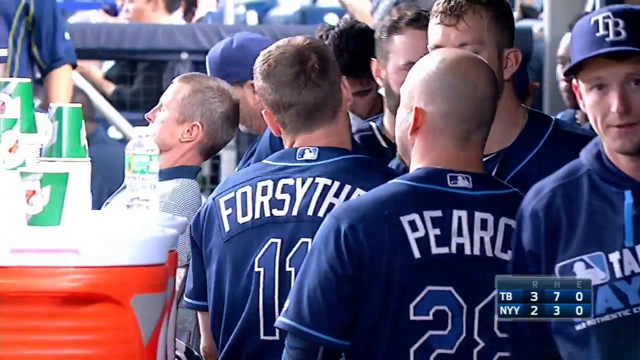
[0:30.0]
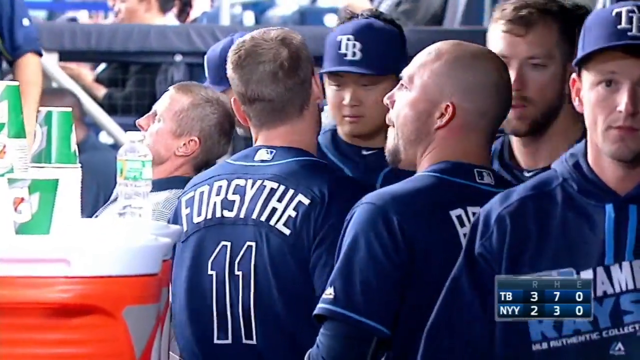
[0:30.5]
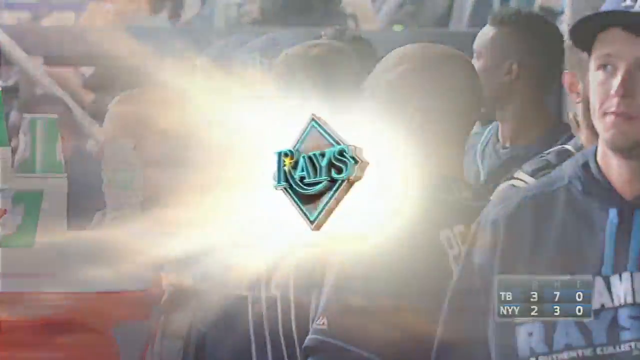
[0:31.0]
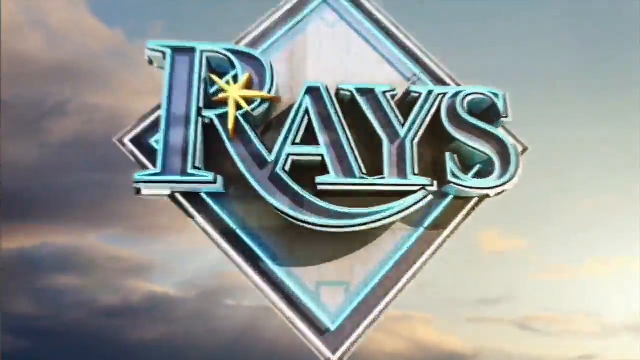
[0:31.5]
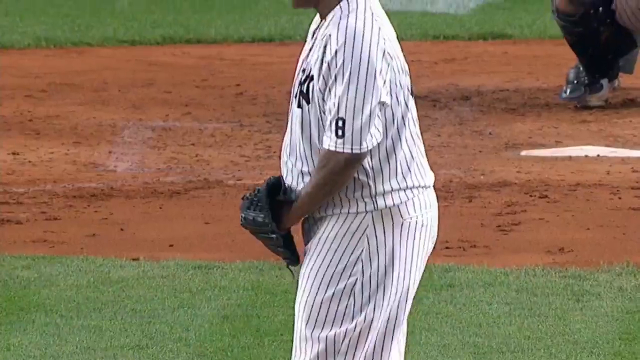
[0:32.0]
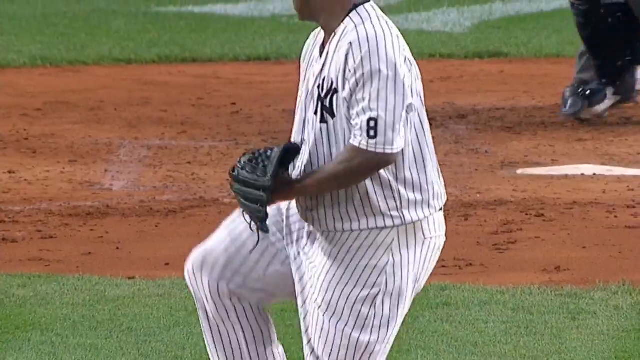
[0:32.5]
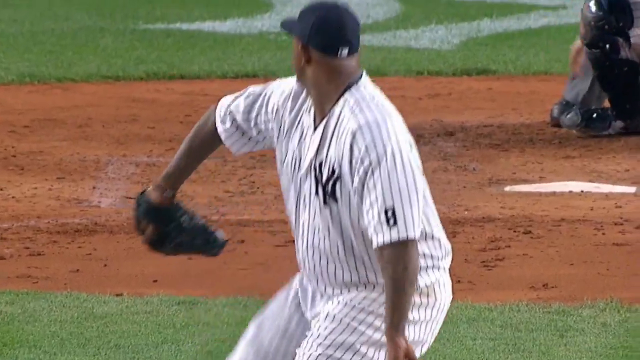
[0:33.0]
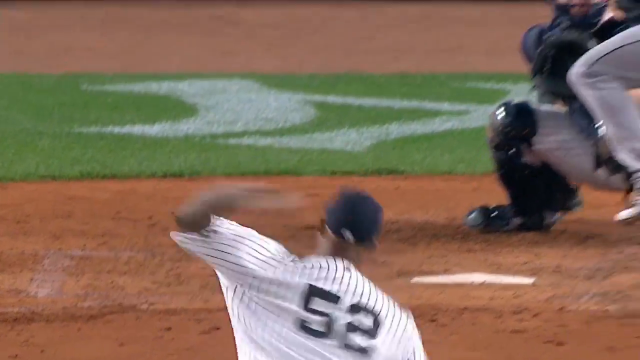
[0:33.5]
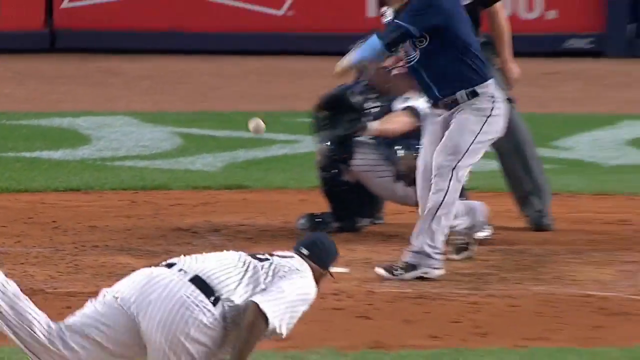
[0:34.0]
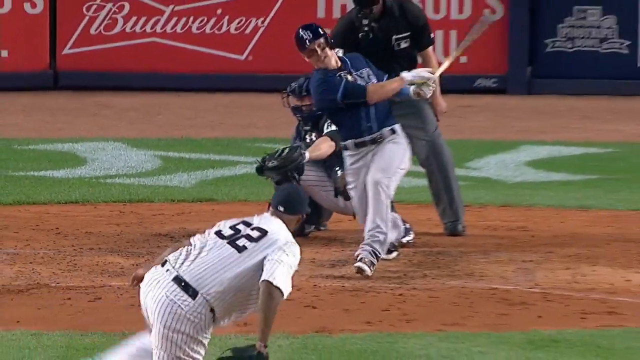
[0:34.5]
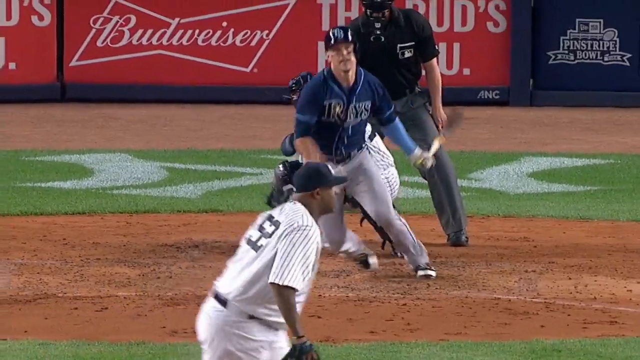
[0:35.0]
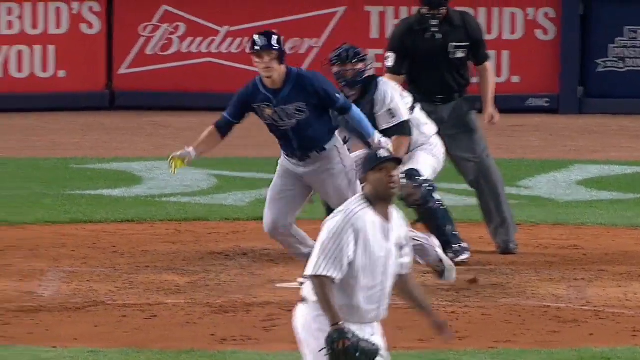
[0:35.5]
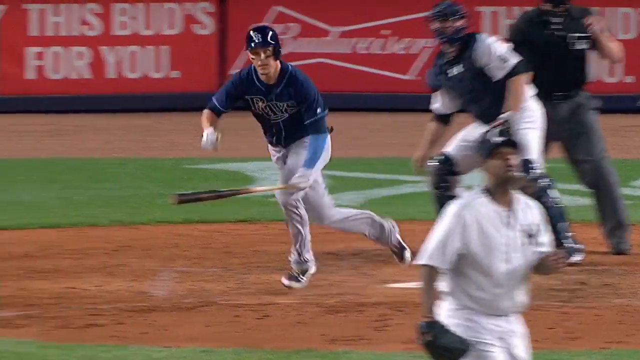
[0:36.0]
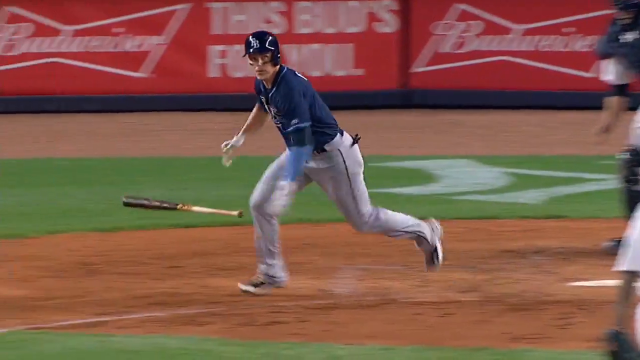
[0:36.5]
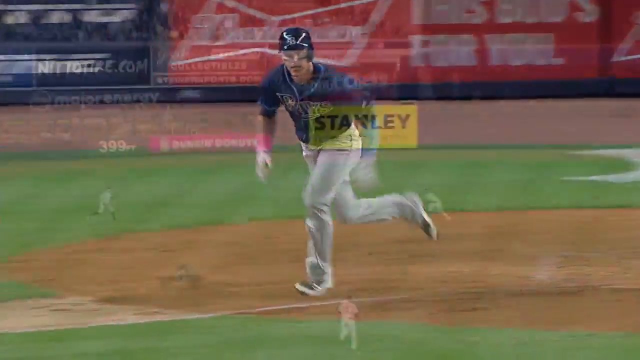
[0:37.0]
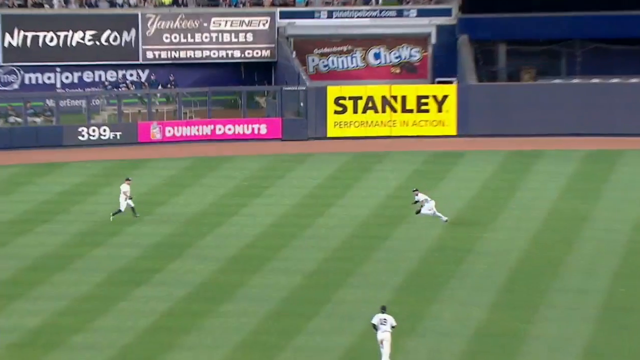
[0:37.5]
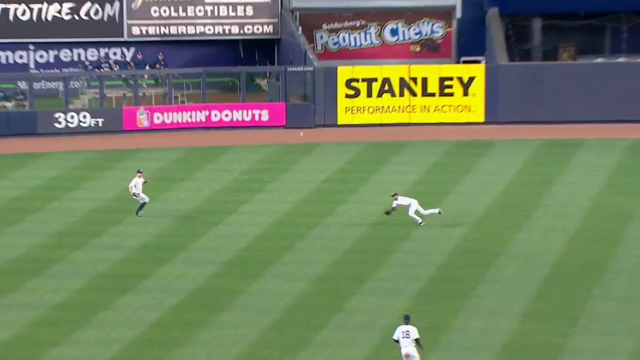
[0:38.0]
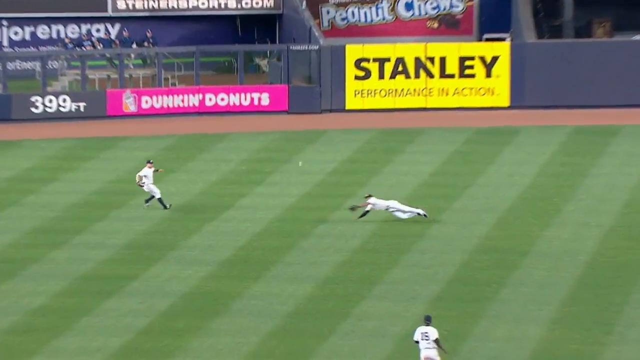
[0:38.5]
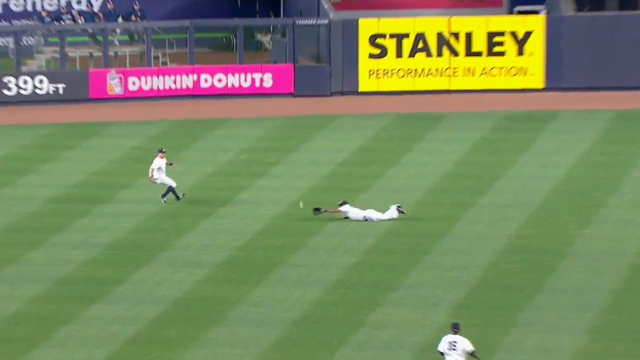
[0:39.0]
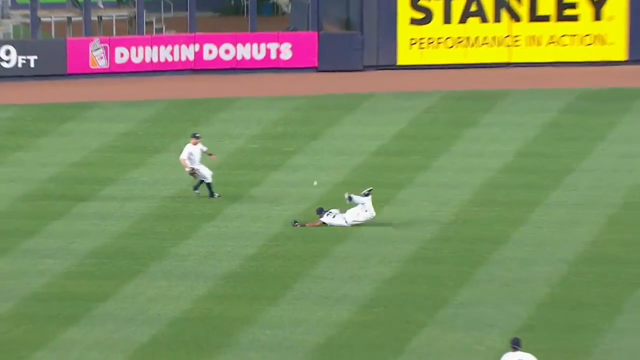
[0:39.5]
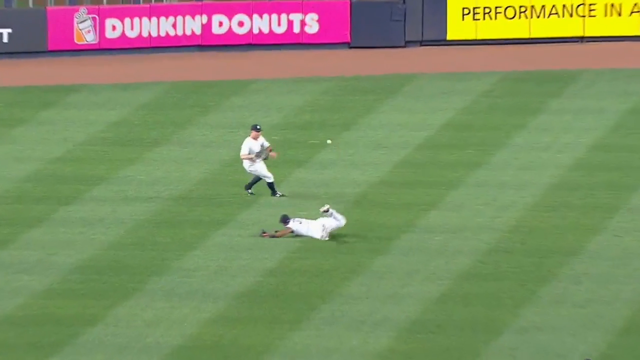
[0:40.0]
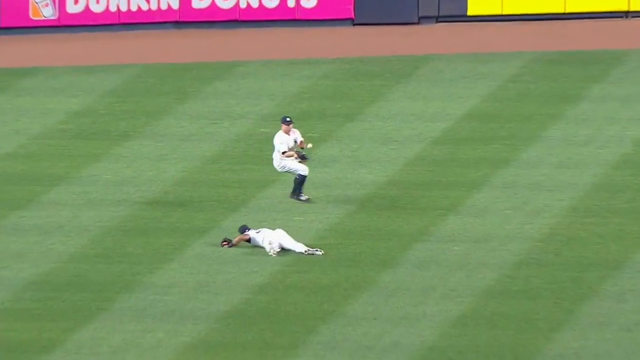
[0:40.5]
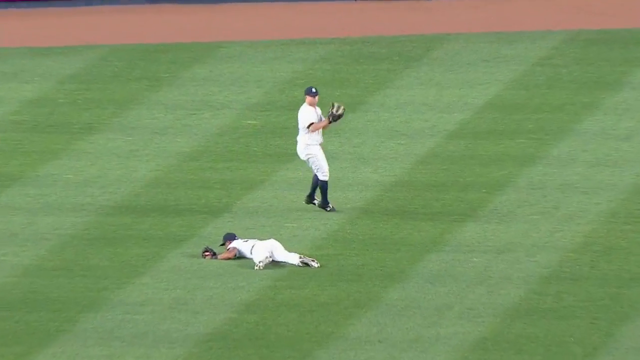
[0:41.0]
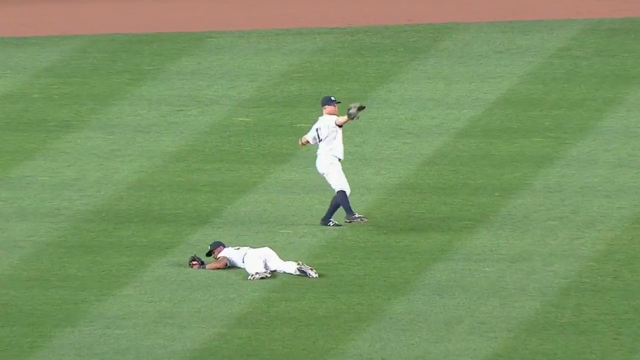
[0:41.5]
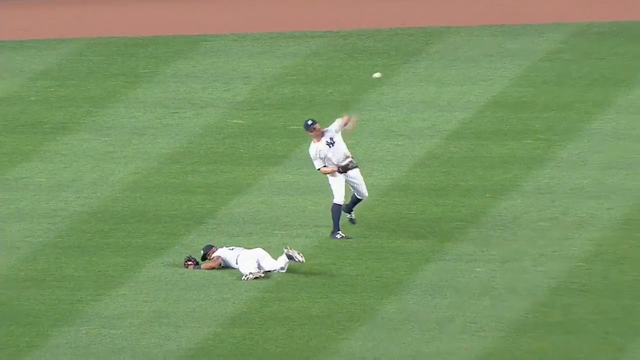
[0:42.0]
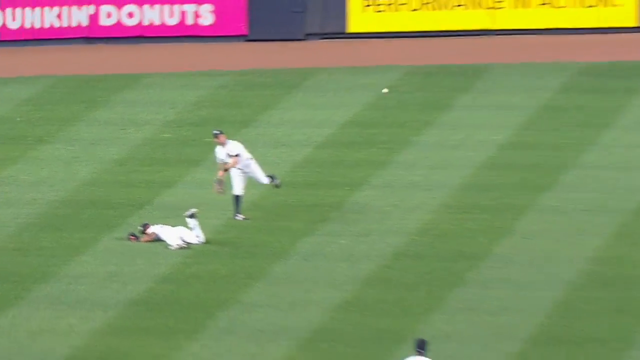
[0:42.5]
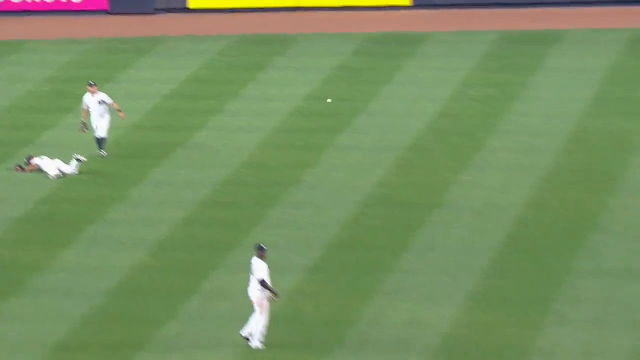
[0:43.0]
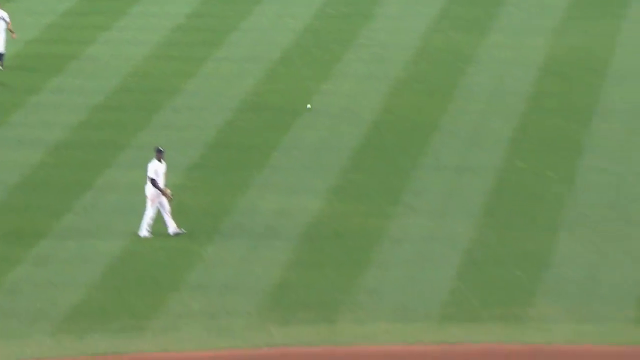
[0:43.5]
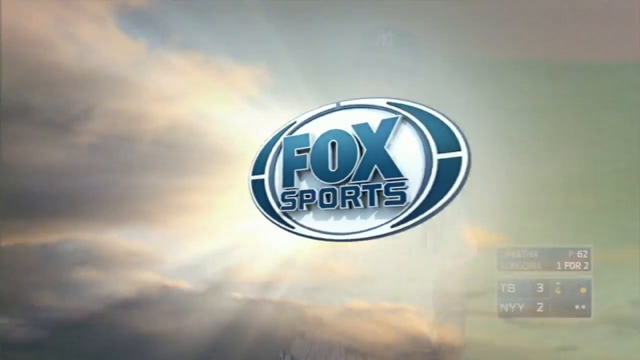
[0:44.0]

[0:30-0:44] On the left side there is a red ice box or cooler box with green caps on top of it. On the right side is a group of men wearing TB baseball team attire. The man on the far right wears a navy blue baseball hat with the word "TB" on it; all the other men from his team seem not to be wearing baseball hats. They all wear navy blue shirts. Two of the men in front, facing away from the camera, have their surnames on the backs of their shirts. The men start moving around, and a sign pops up on the screen with the word "RAYS" in a diamond-shaped border. Both the word and the border are turquoise, the letter R has a yellow star on it, and behind the diamond border is a background of blue sky with a few clouds. The scene changes to a man wearing striped pants and a t-shirt, with a black glove on his right hand and the number 8 in black on his left sleeve. He swings the ball, and the camera pans out to show the batter in a navy blue shirt and white pants swinging his bat and hitting the ball. The batter runs as soon as the ball makes contact with the bat, throwing his bat on the ground. The scene changes to three catchers running on the field. One catcher dives down and misses the ball, and another runs from left field and catches it. That catcher then throws the ball to the right. A logo with the sign "Fox Sports" appears.